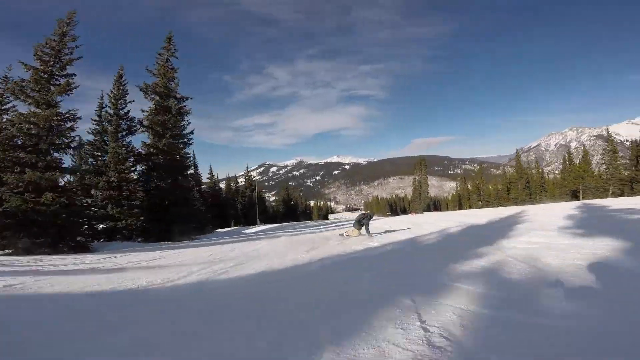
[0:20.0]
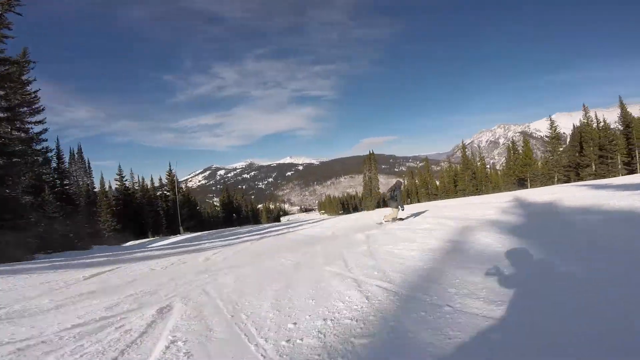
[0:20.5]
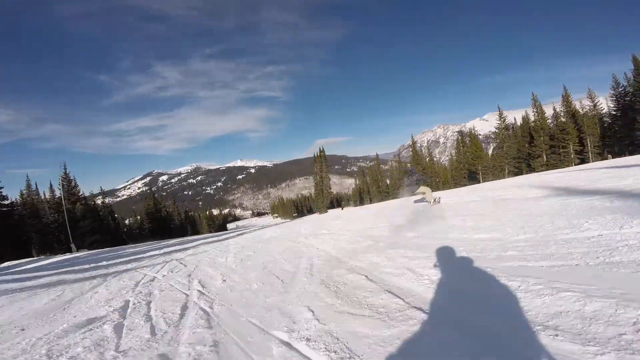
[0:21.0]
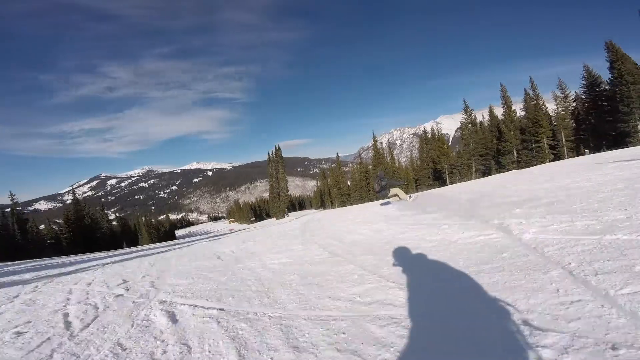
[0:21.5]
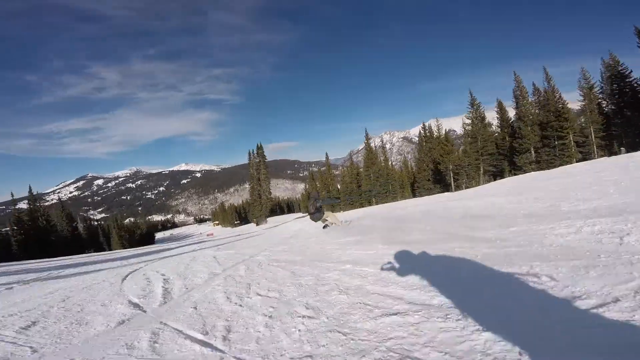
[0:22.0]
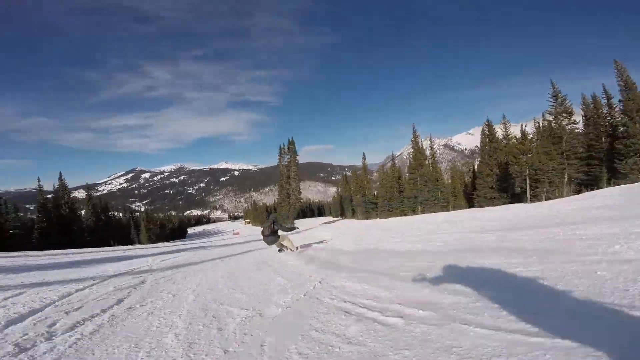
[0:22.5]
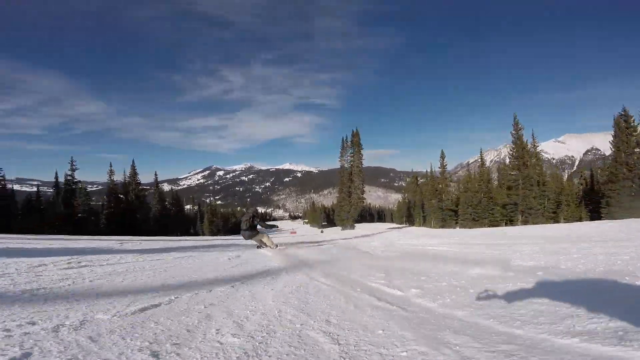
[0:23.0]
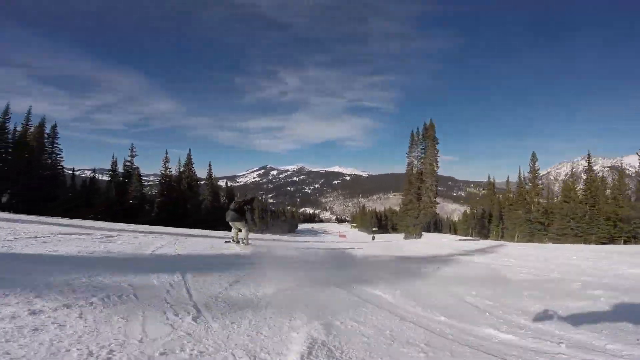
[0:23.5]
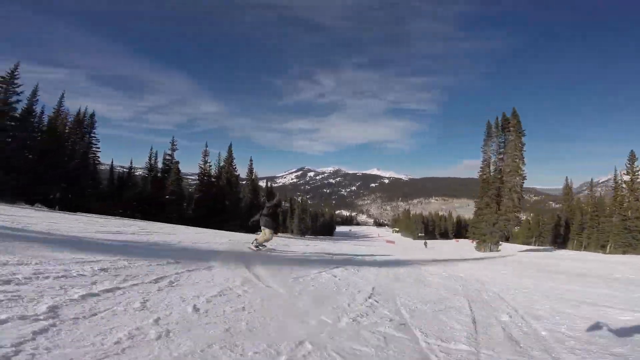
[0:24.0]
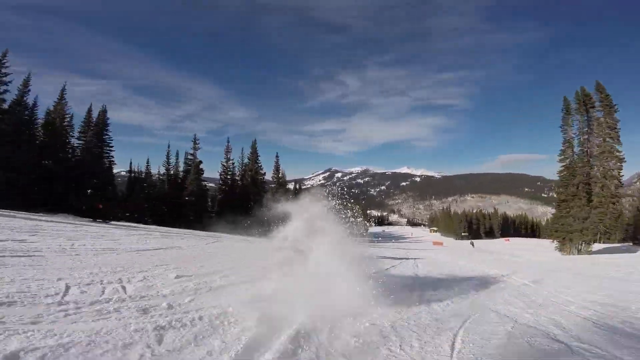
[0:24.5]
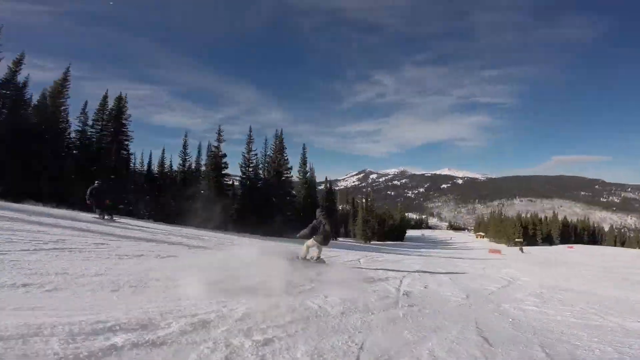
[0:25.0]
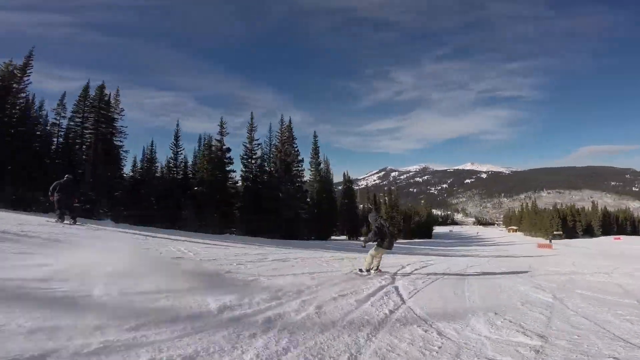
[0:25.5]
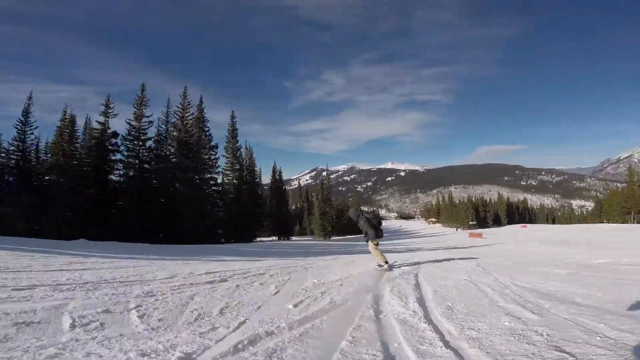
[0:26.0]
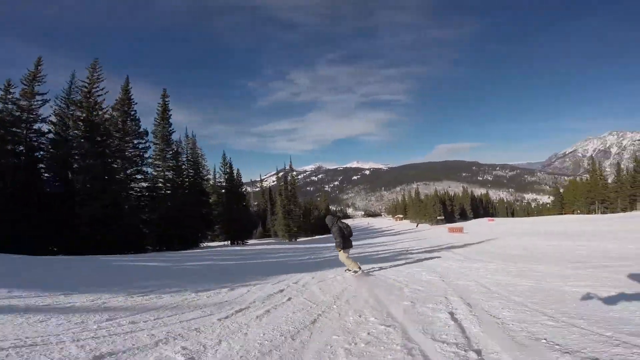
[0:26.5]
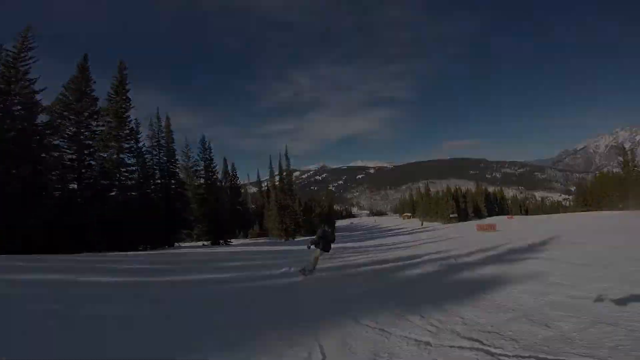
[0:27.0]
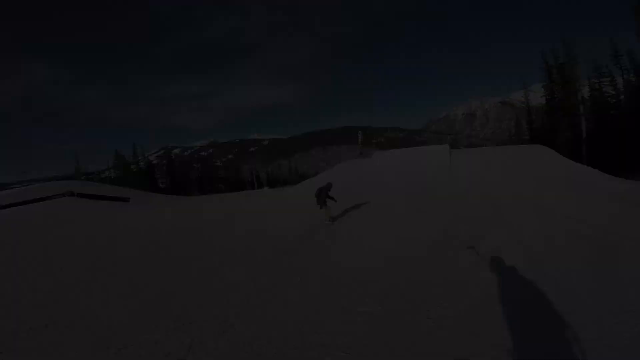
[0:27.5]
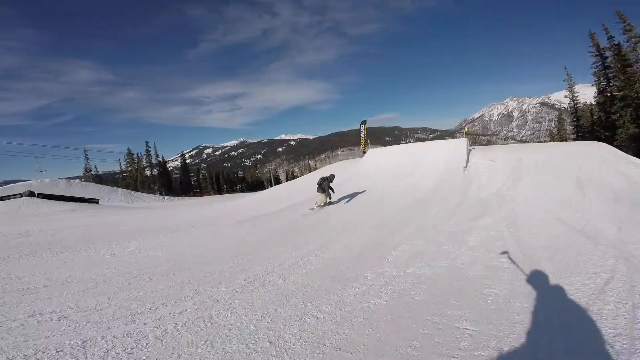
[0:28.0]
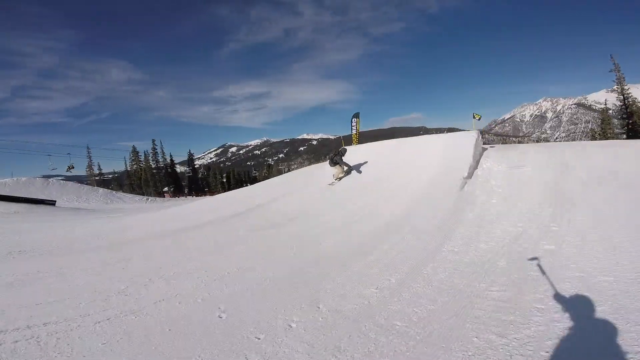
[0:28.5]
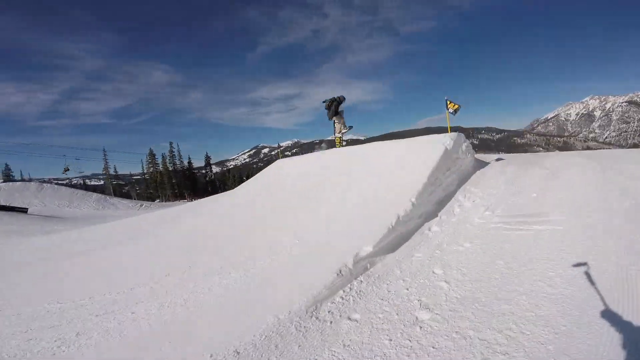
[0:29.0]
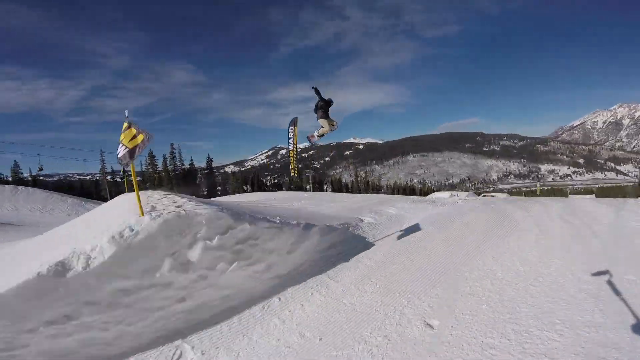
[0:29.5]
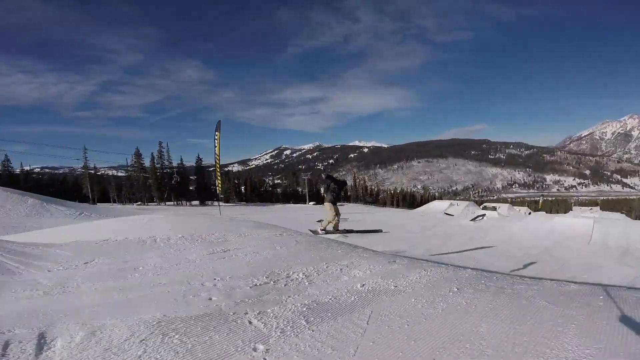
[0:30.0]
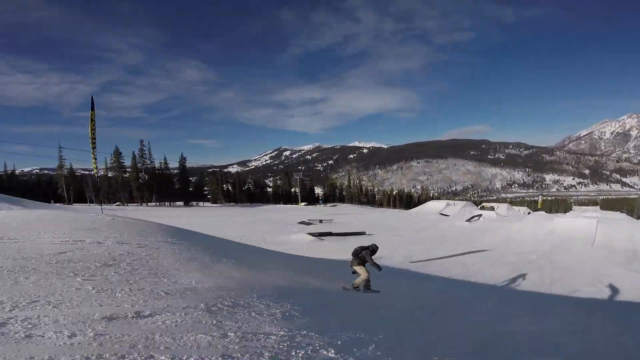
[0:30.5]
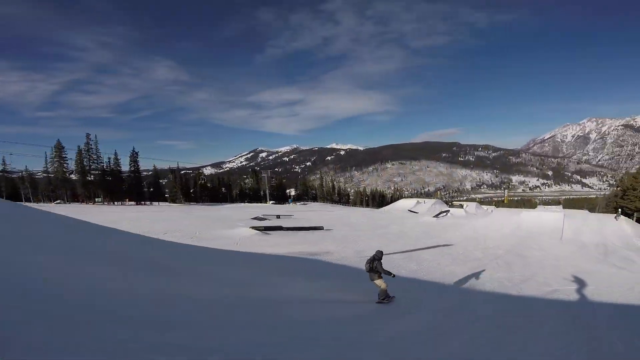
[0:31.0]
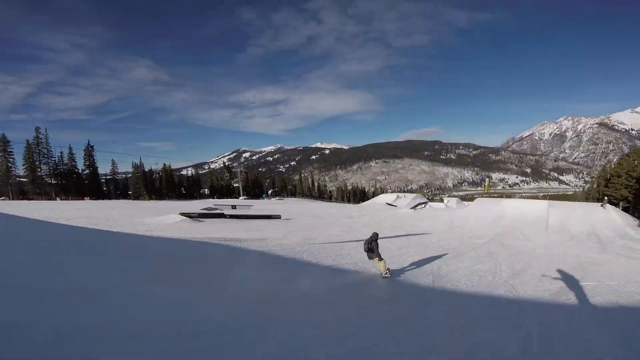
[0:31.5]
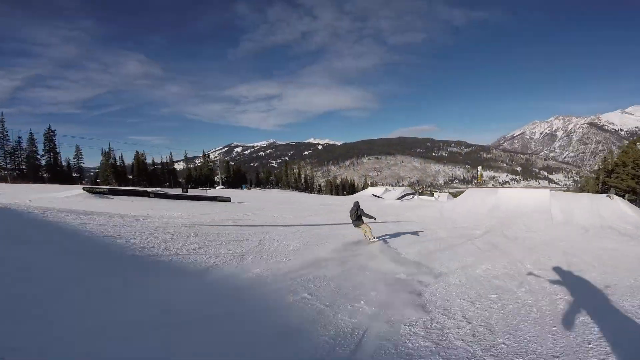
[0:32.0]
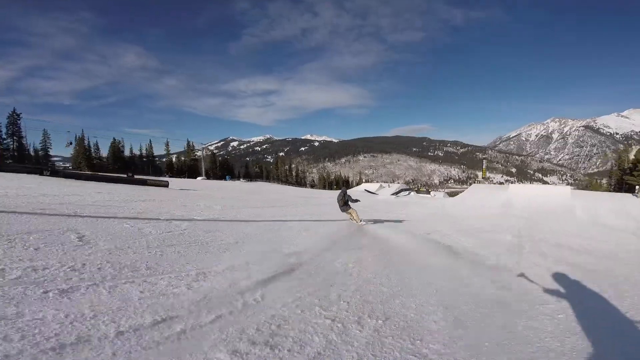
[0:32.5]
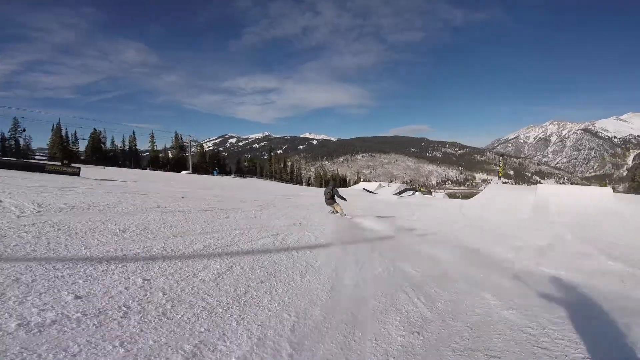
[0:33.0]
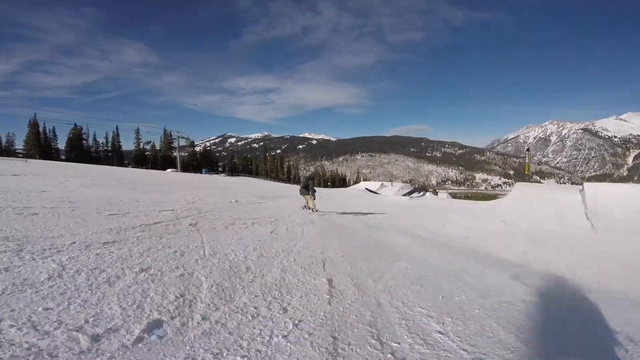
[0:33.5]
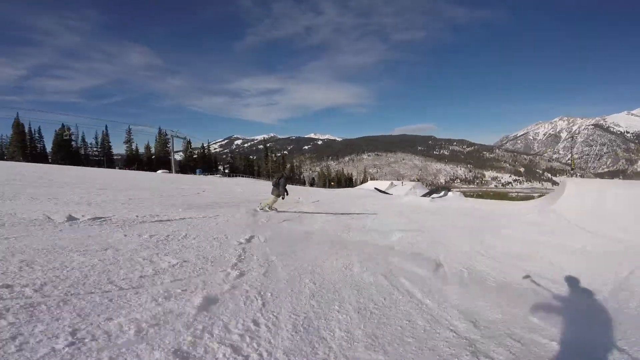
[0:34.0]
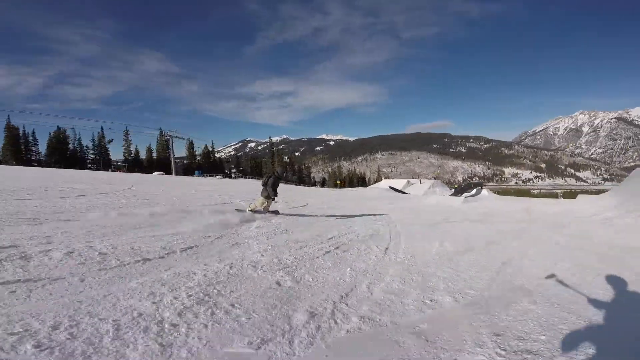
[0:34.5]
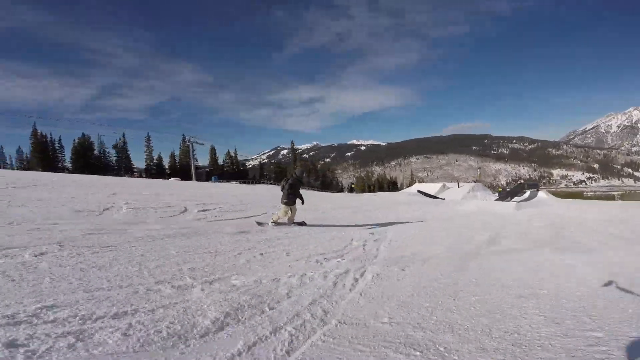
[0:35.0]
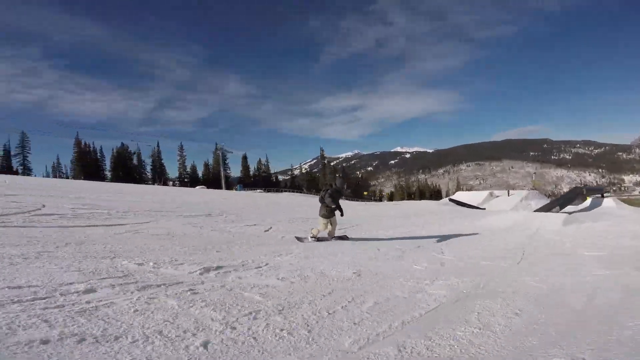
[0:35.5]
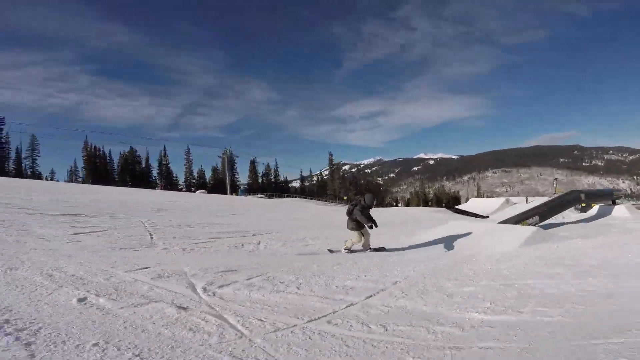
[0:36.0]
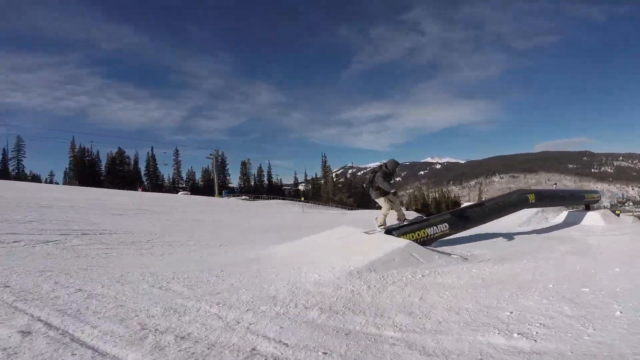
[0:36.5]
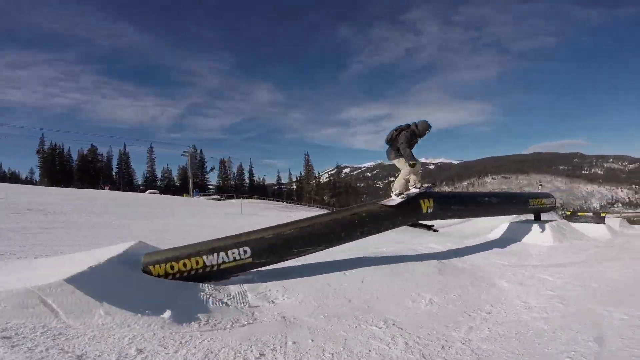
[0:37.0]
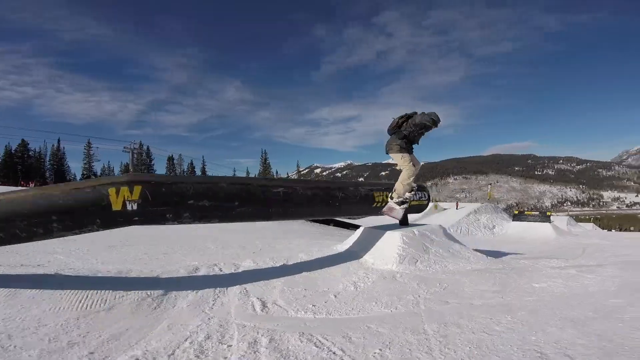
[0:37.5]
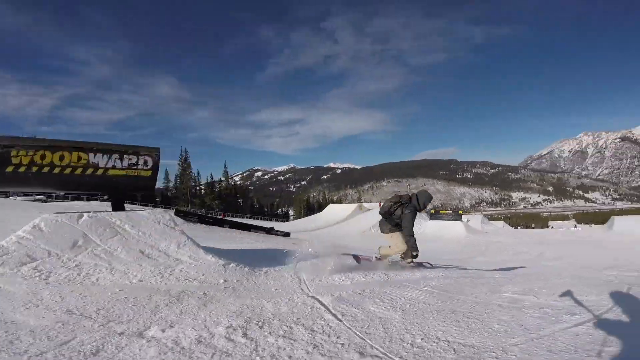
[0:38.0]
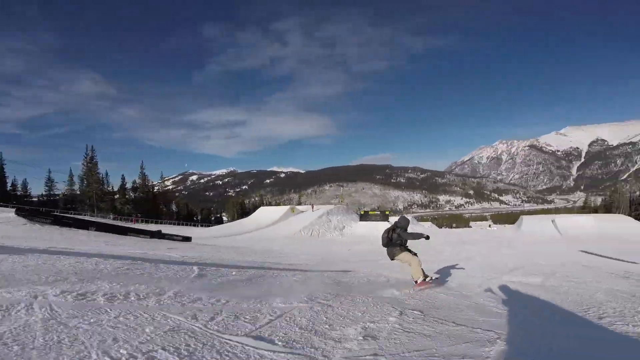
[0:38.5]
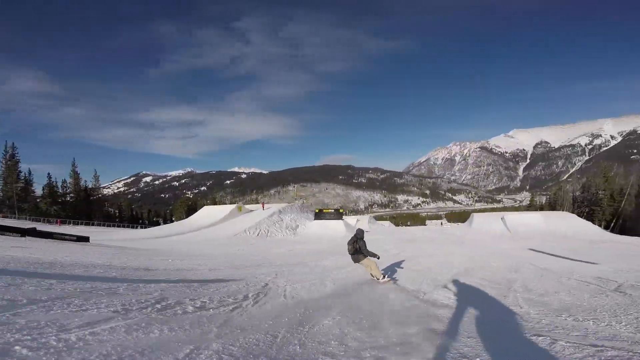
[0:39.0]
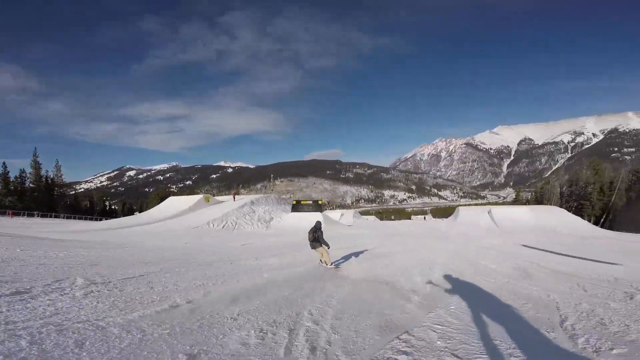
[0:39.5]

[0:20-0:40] Someone goes down a ski run on a snowboard, leaning fairly far to the right with a hand on the ground. Tall green evergreen trees line both sides of the lane they are going down. A cameraman follows the snowboarder, and the camera person's shadow is visible on the snow at the very bottom of the picture. The snowboarder goes from left to right, spitting up snow into the camera itself. In another shot, the snowboarder goes over a ramp made of snow with flags on both sides. He flies into the air, kicks his snowboard up toward the left, comes down on a soft landing, turns left, turns back right, and goes over what looks like a big black pipe with "Woodward" on its side. He skis across the top of it, goes down onto the snow on the far side, and turns back toward the left.